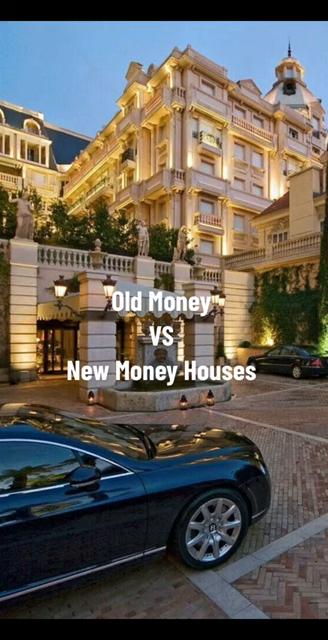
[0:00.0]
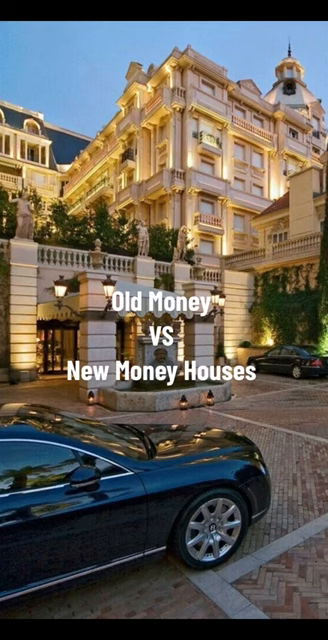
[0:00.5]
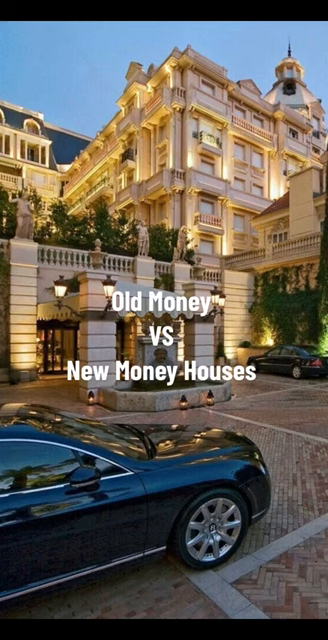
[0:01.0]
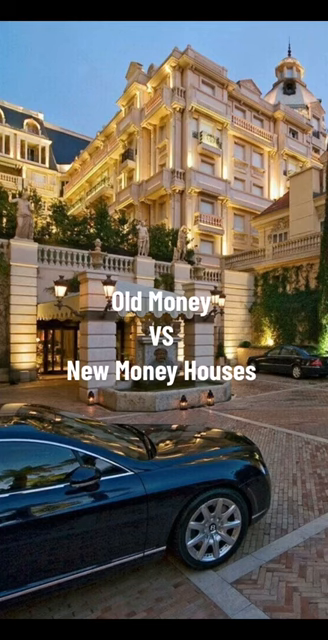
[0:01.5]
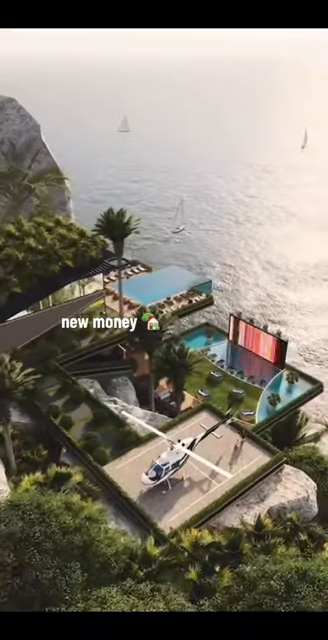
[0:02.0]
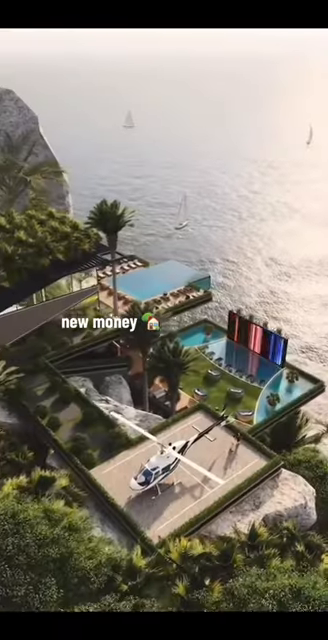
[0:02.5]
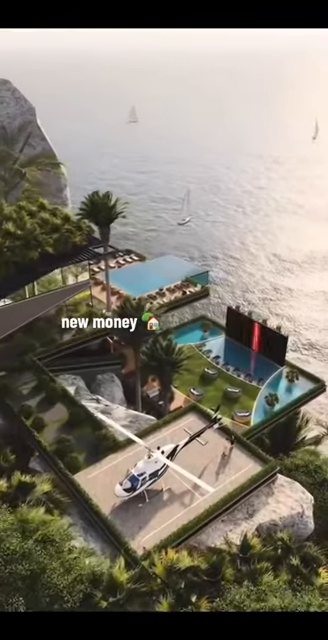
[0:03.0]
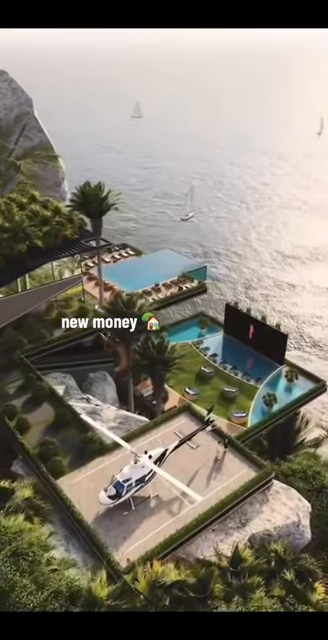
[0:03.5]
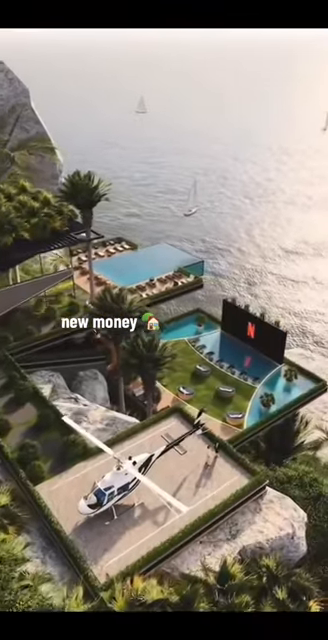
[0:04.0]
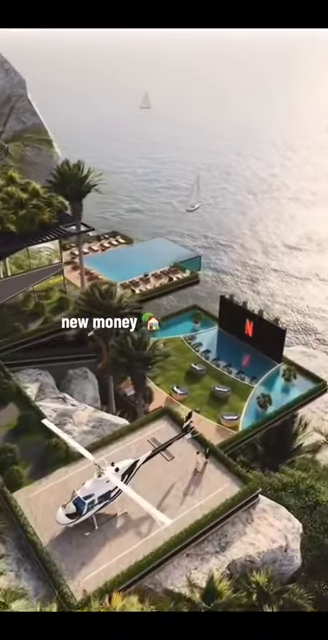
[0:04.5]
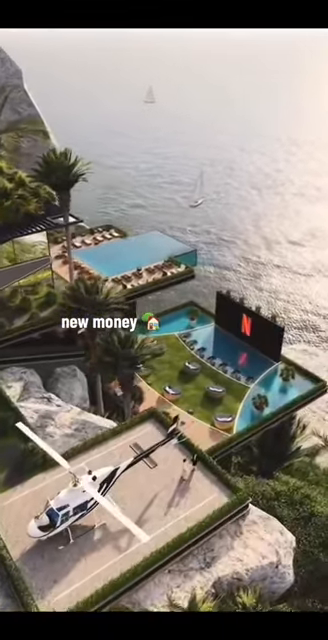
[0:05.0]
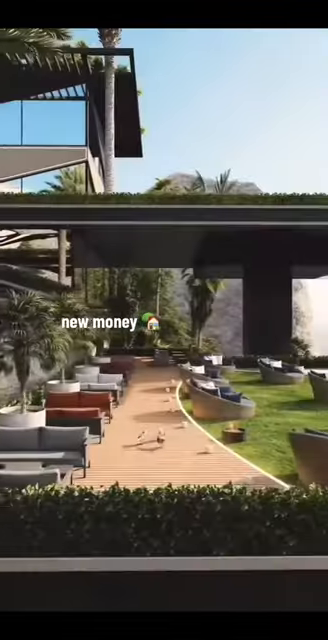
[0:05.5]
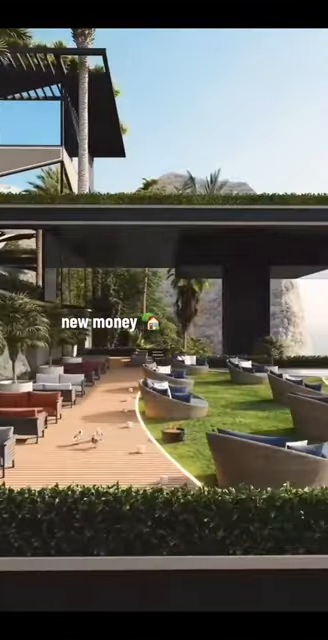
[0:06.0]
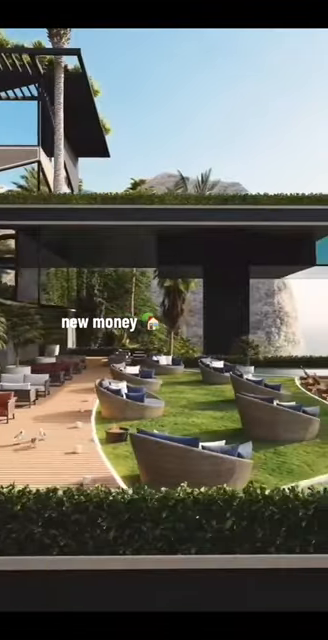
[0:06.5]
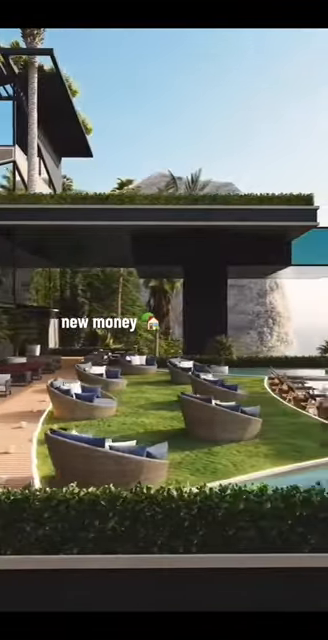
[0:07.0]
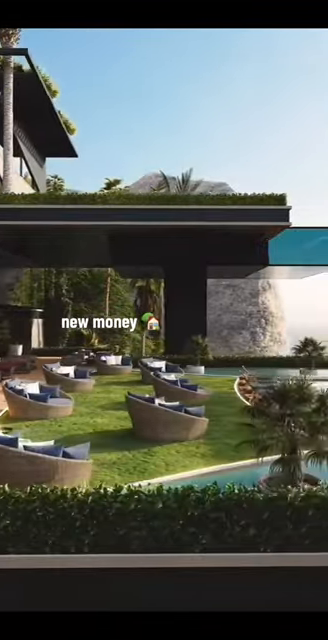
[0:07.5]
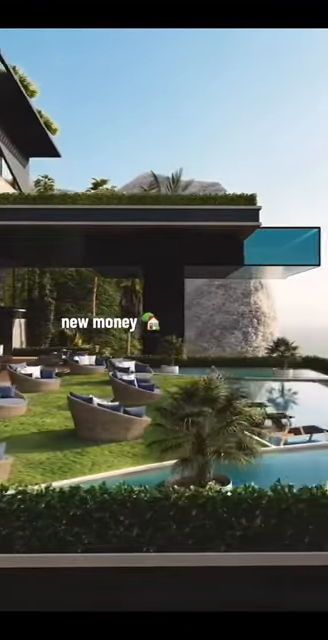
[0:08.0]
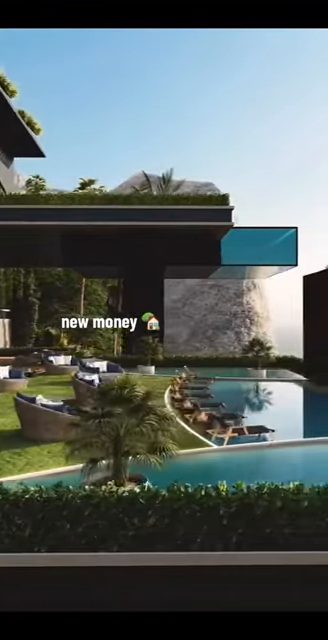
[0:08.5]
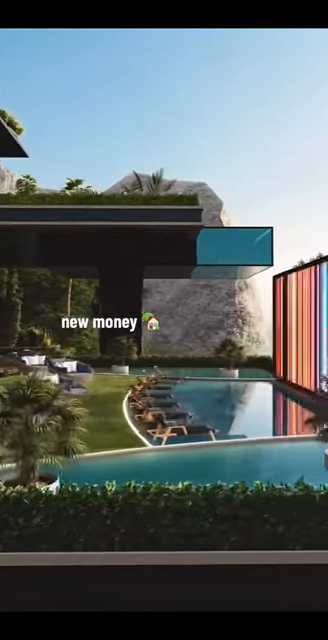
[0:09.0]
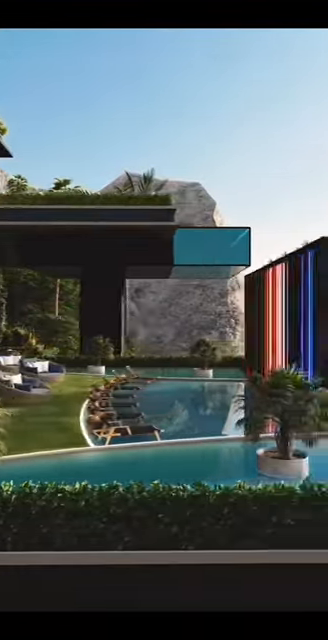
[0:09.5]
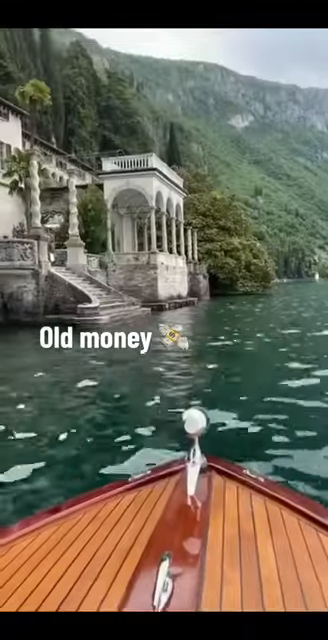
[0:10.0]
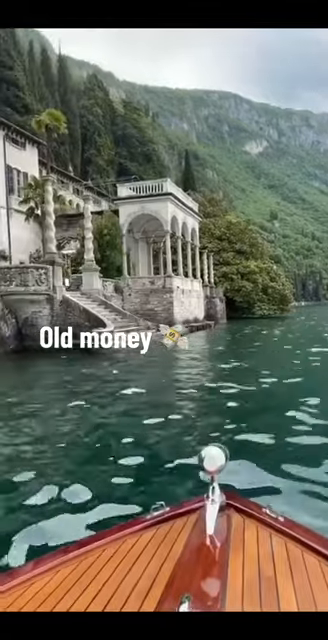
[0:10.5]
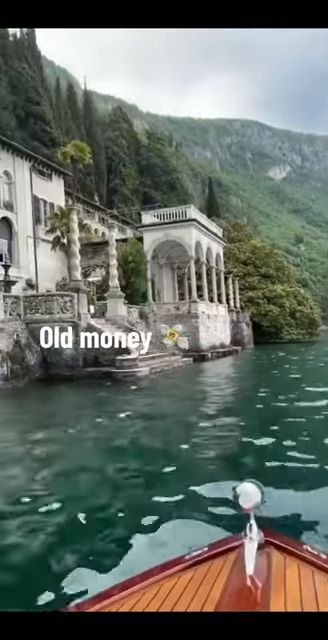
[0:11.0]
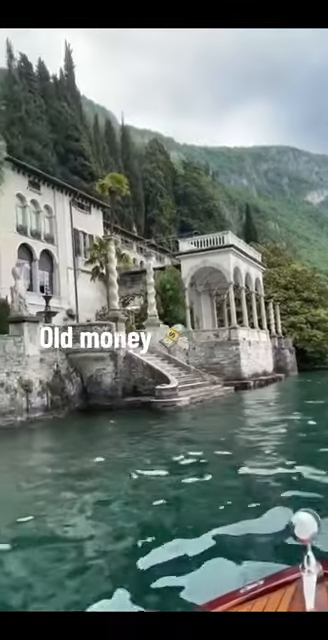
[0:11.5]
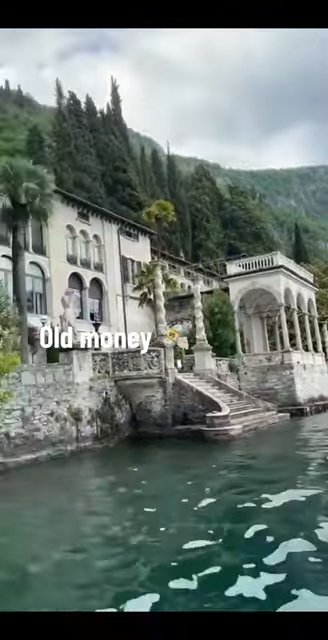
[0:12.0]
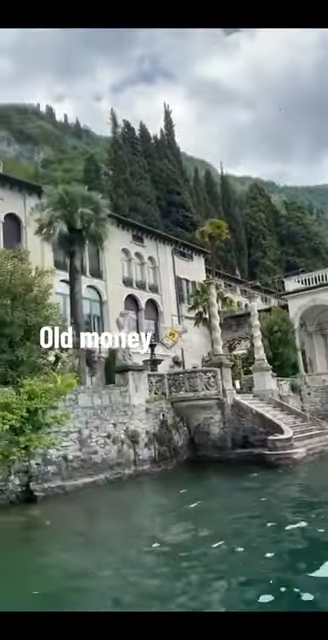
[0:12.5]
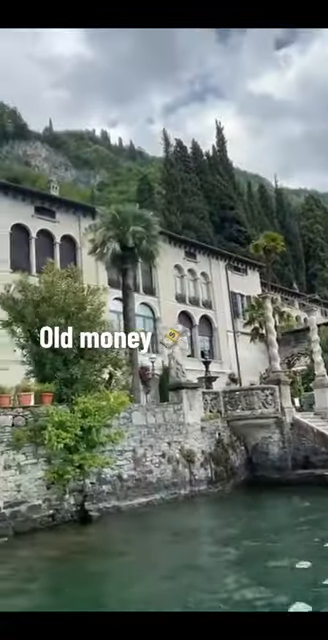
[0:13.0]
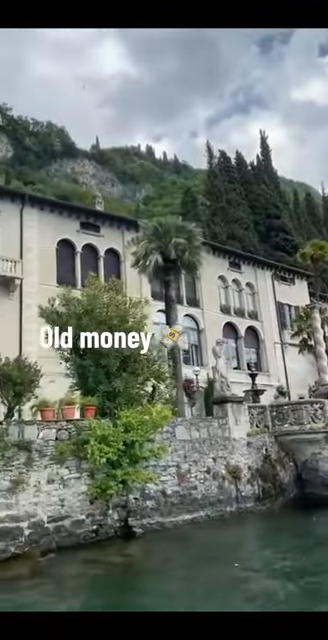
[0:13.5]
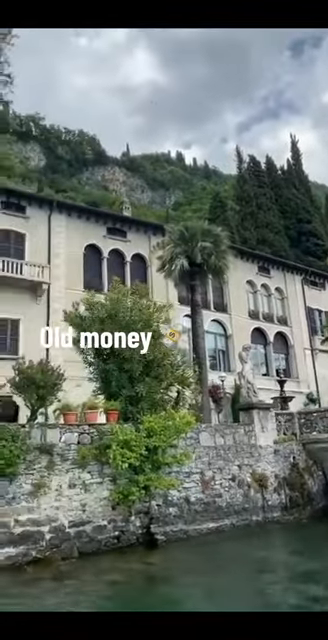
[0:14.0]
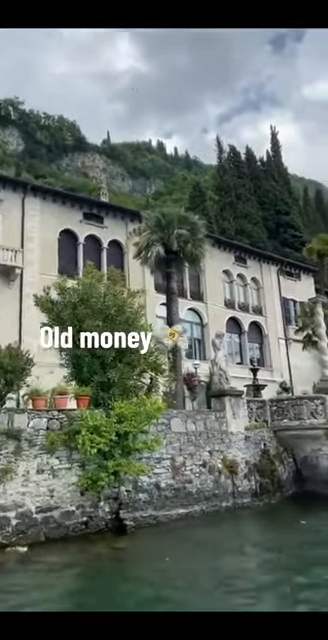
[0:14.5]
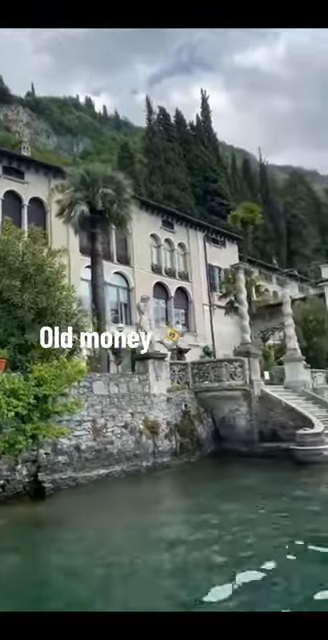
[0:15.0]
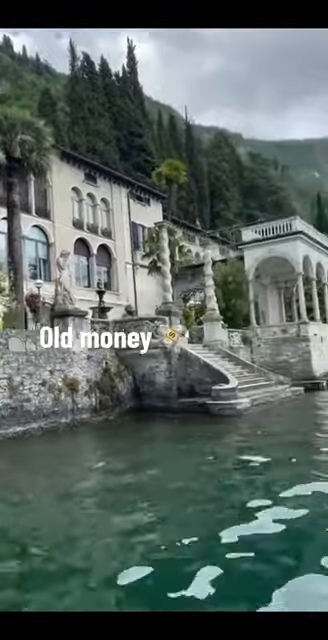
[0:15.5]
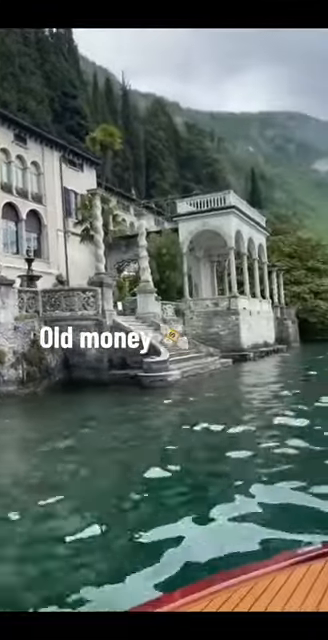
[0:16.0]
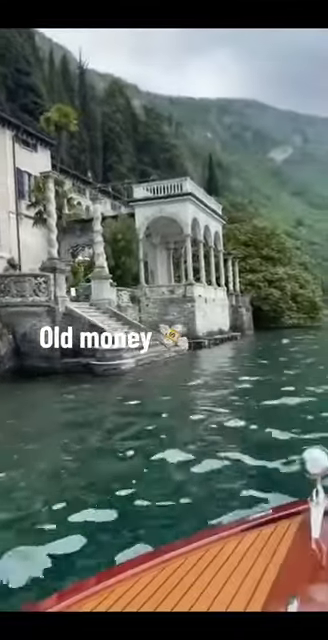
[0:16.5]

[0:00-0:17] The video contrasts new money and old money, seemingly using real-life examples, with the only text being the labels "old money" and "new money." It starts with new money, which looks really flashy and in-your-face, with a lot going on. Old money, by contrast, looks more classic, refined, luxurious and quiet. The environments almost look similar but are not quite the same: the new money setting is tropical, while the old money setting is more aristocratic/European. With old money, the homes and backyards are not clearly shown, whereas the new money scenes show everything openly.